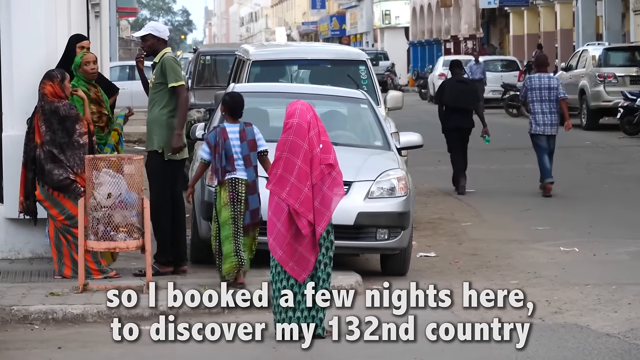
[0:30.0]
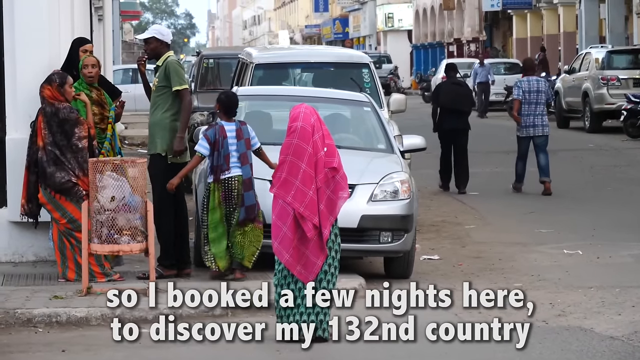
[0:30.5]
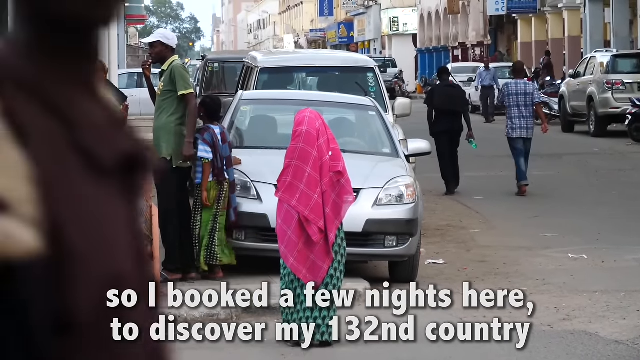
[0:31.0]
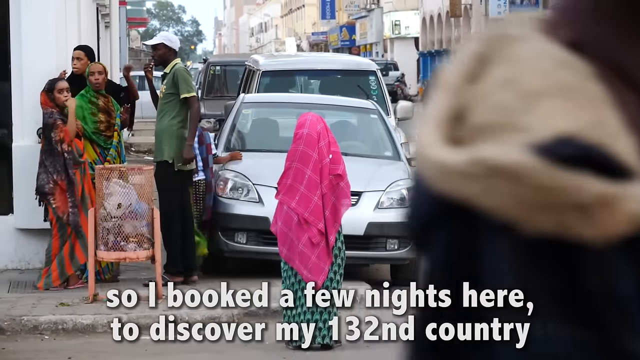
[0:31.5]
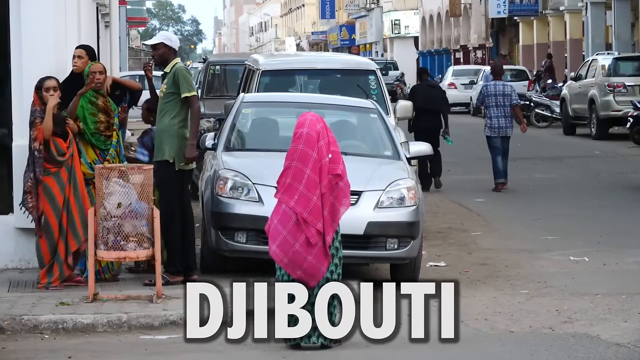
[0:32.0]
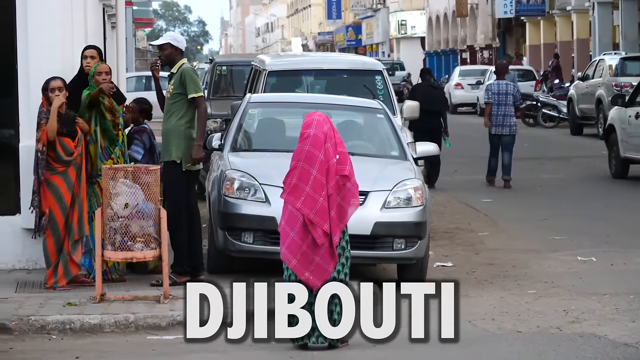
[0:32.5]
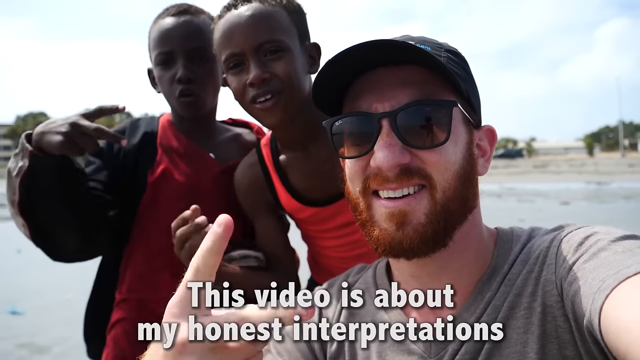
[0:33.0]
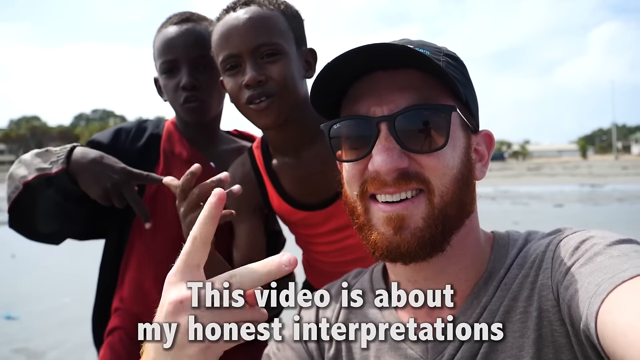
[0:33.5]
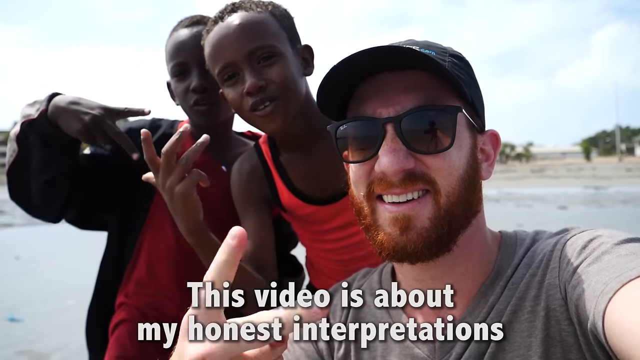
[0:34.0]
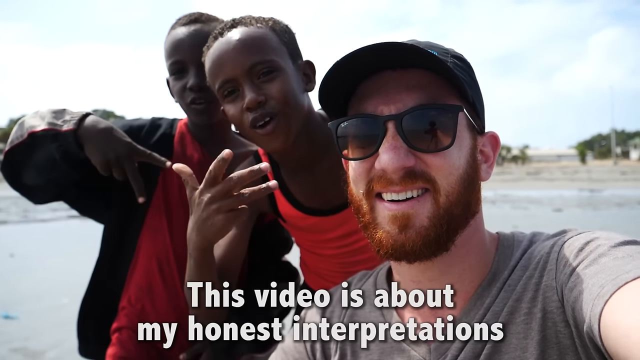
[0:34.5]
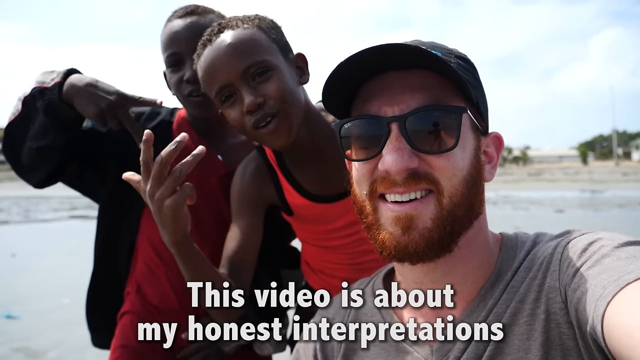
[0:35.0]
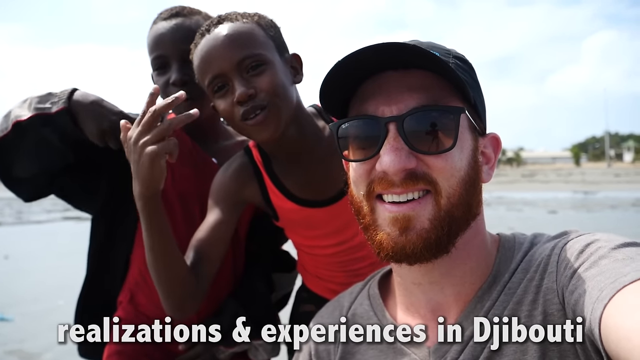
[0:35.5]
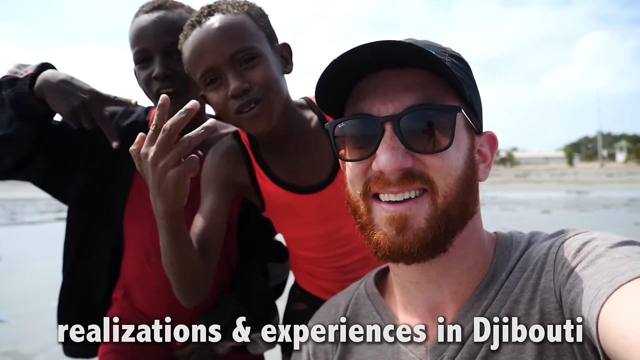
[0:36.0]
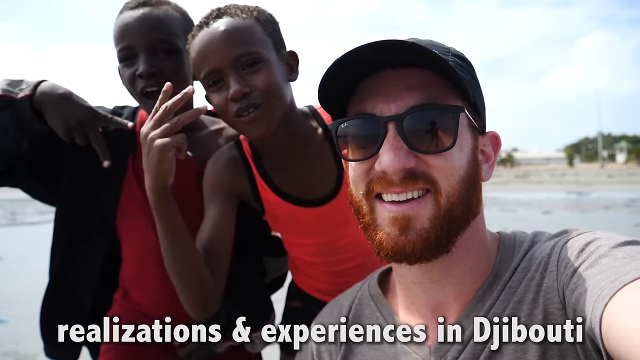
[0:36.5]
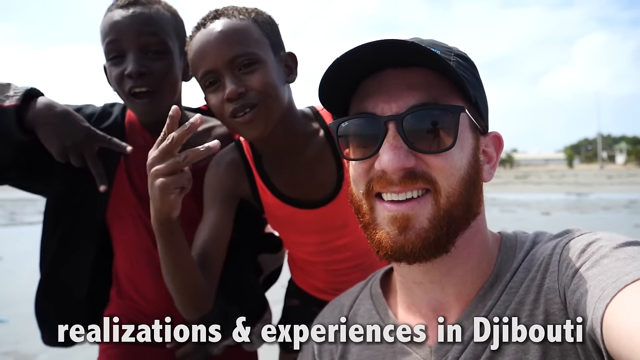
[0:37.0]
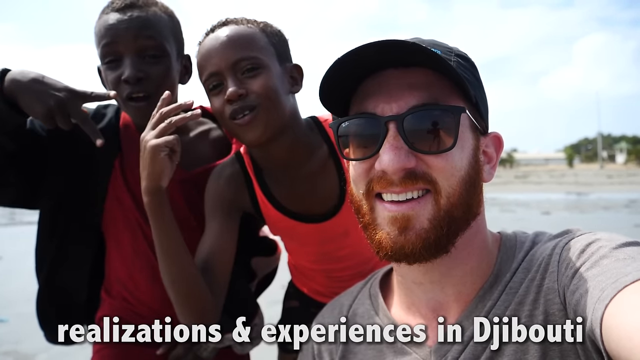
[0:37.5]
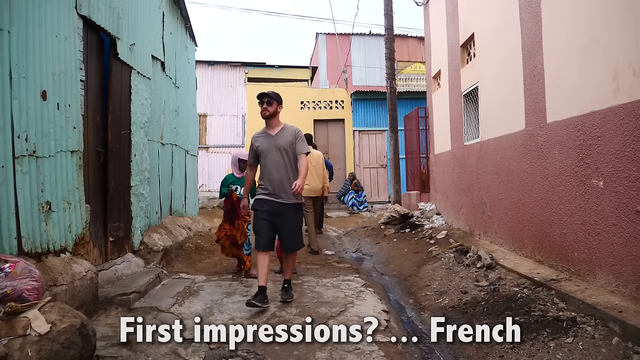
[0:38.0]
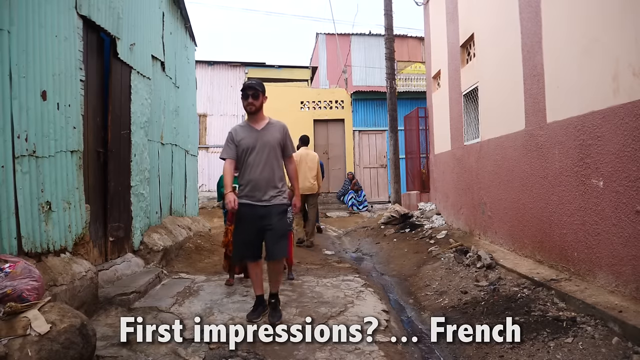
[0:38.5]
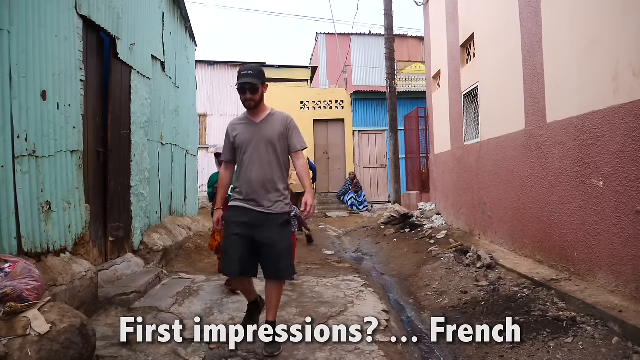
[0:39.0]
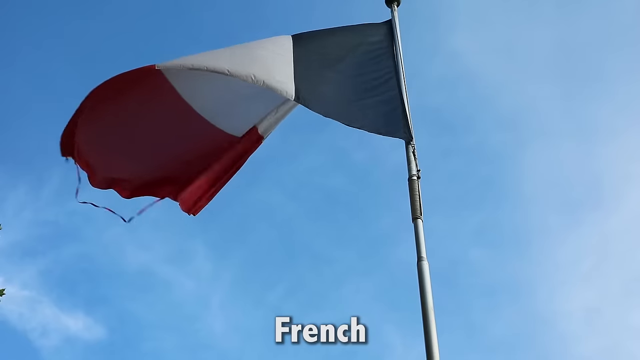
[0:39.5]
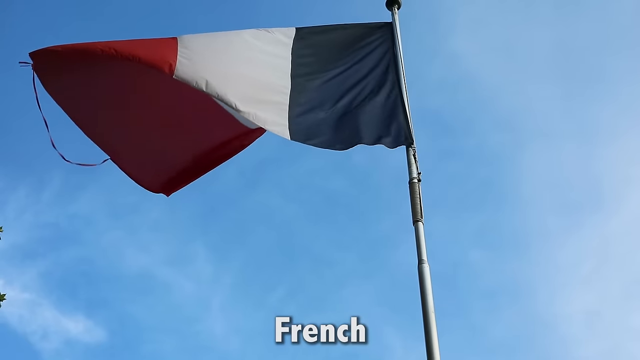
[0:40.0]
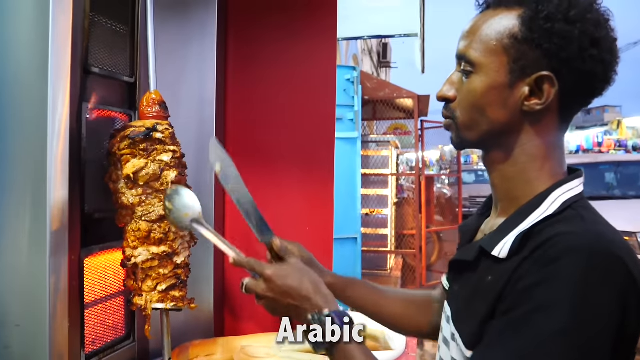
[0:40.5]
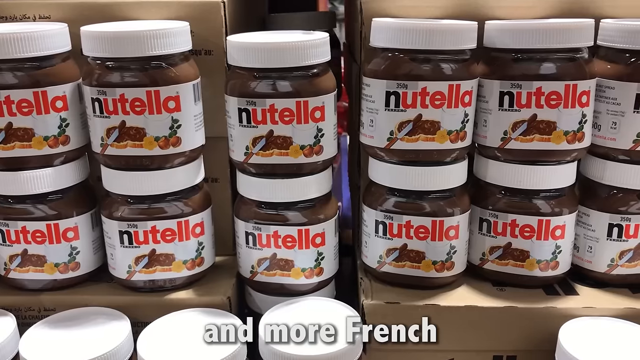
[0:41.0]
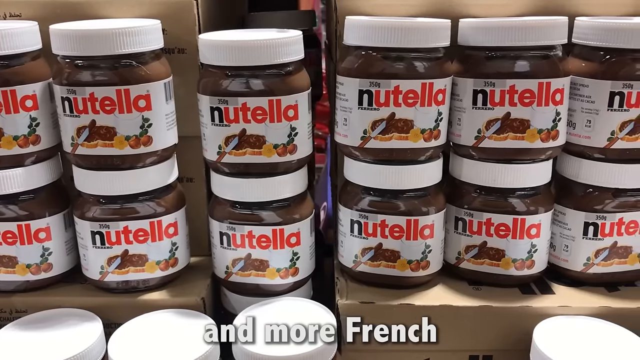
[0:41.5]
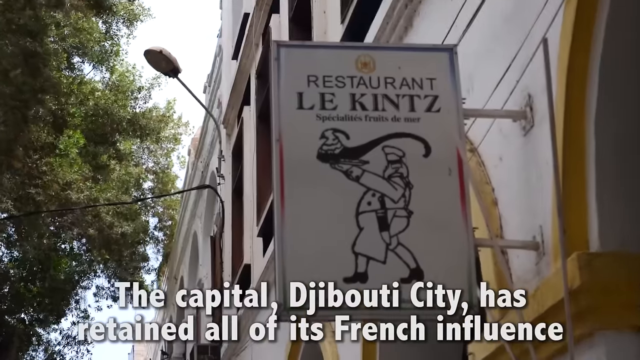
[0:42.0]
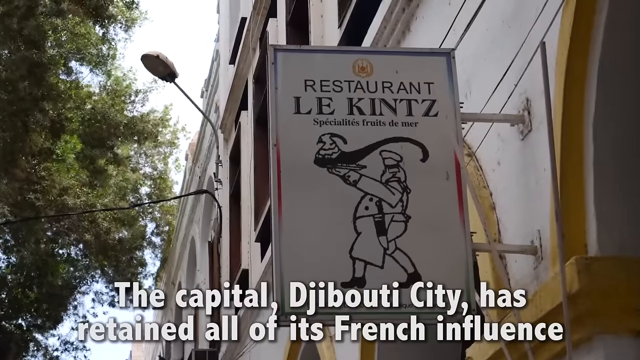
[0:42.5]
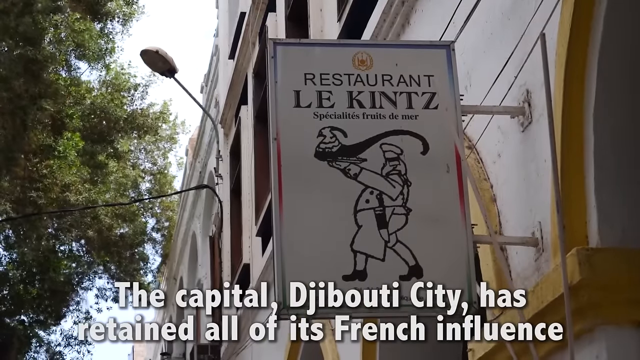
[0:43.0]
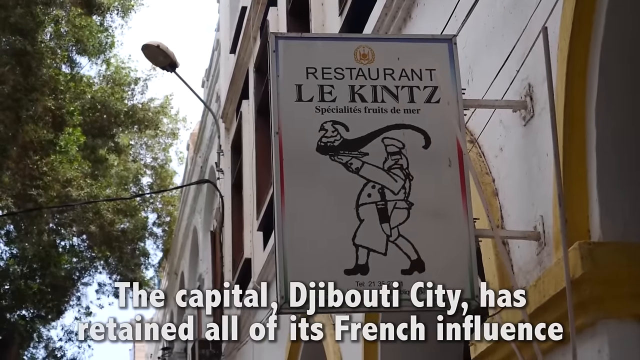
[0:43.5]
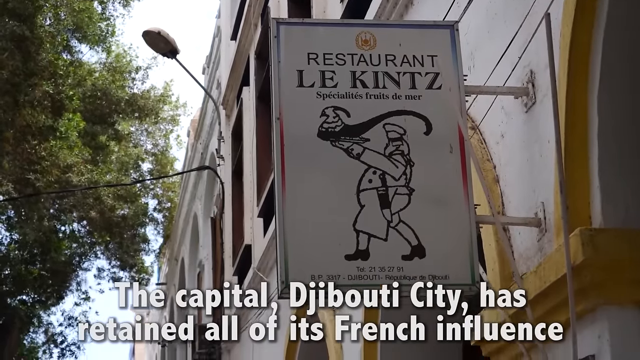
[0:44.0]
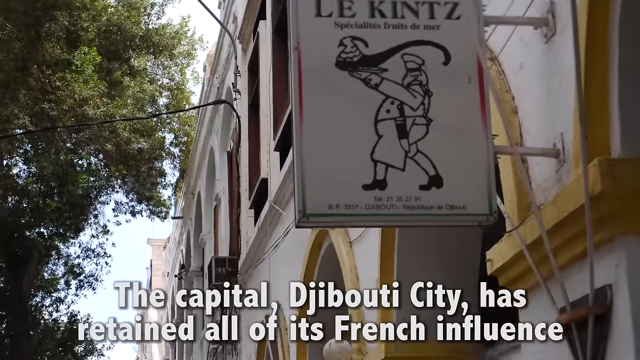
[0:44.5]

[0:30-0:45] The video covers his first impressions of Djibouti. Text says he booked a few nights at a hotel here, and that this is the 132nd country he has visited; apparently French and Arabic are spoken there. Dirty alleyways are shown. One shot has jars of Nutella, and a man cuts meat off a spigot, like a gyro. Text names a restaurant, "La Quince," pointing to the country's French background. Little boys in the video wear red shirts. A French flag is flying. A woman in a red head covering is turned away so her face cannot be seen. Many buildings look old and run down, while the restaurant building looks nicer.